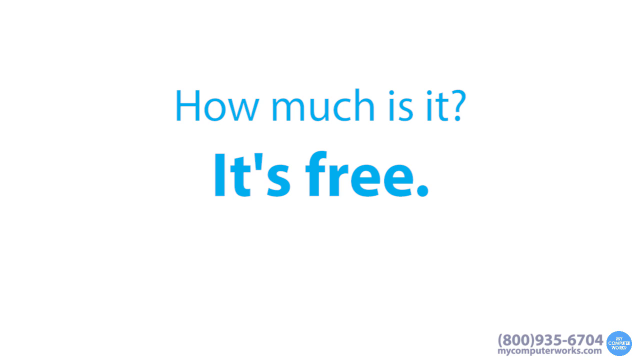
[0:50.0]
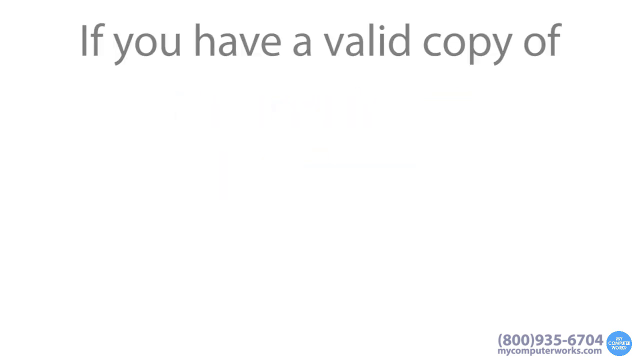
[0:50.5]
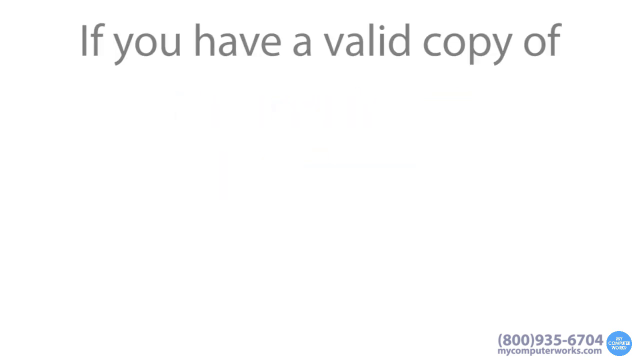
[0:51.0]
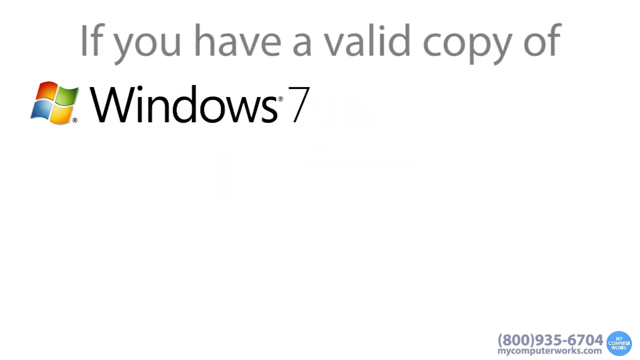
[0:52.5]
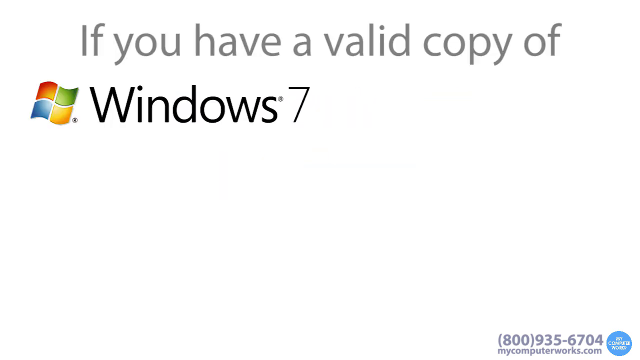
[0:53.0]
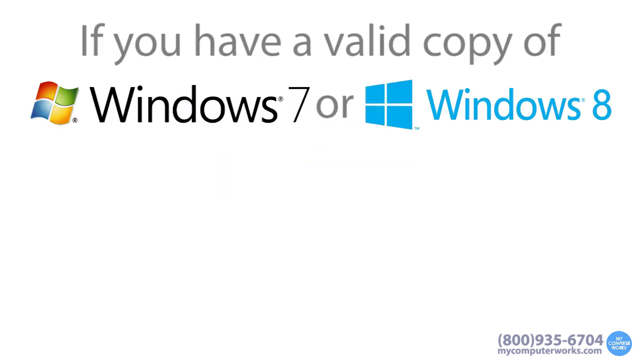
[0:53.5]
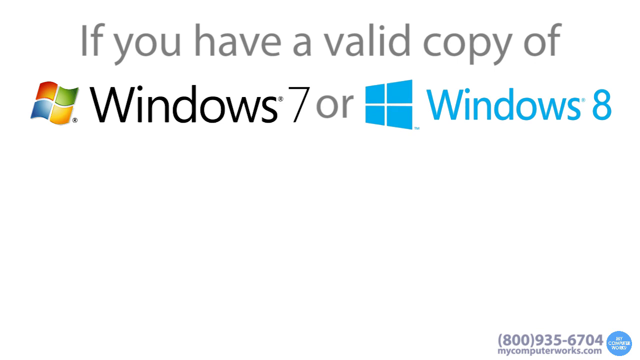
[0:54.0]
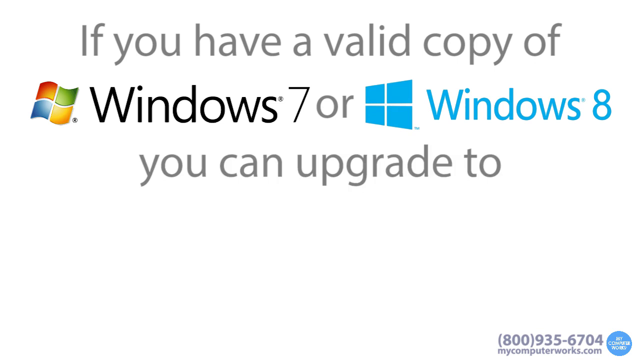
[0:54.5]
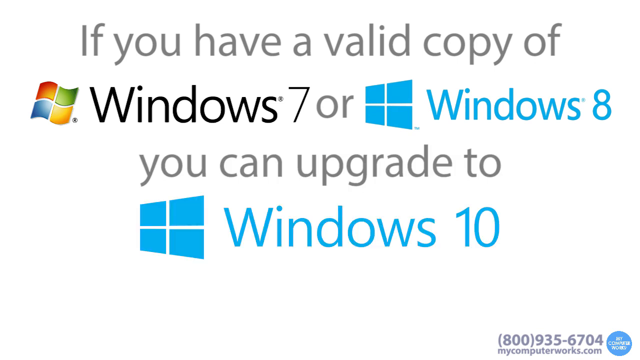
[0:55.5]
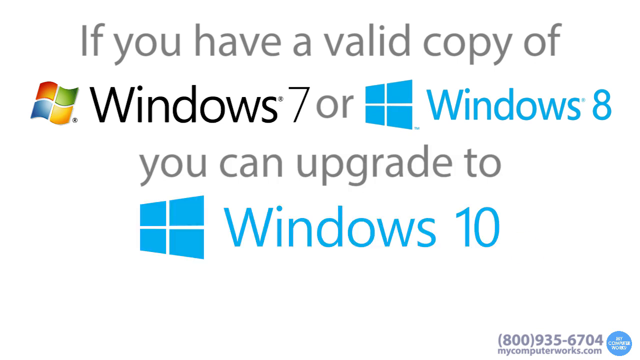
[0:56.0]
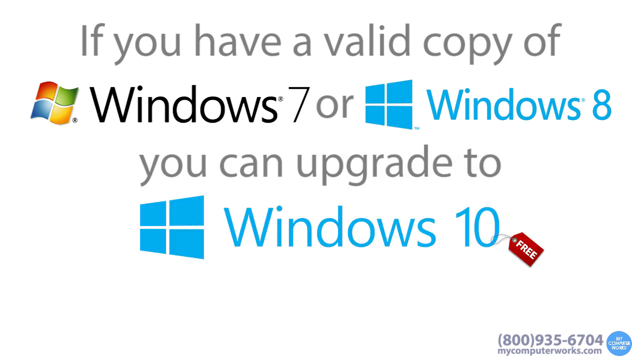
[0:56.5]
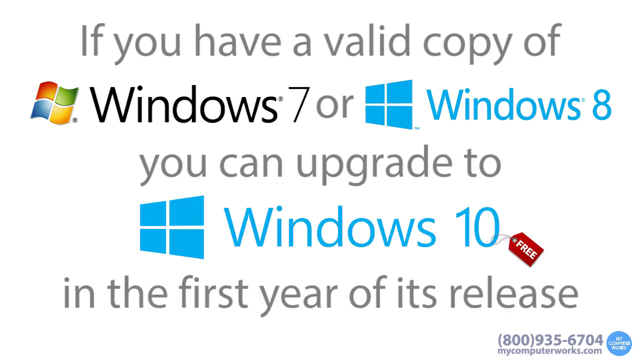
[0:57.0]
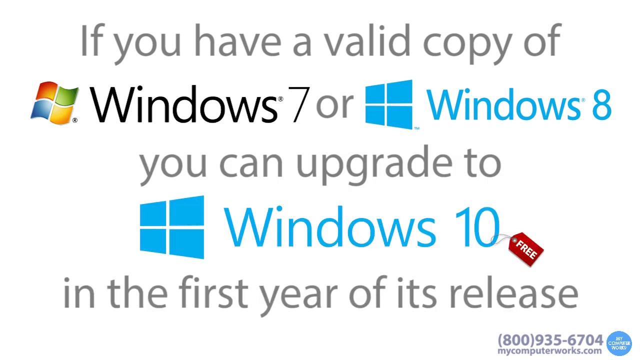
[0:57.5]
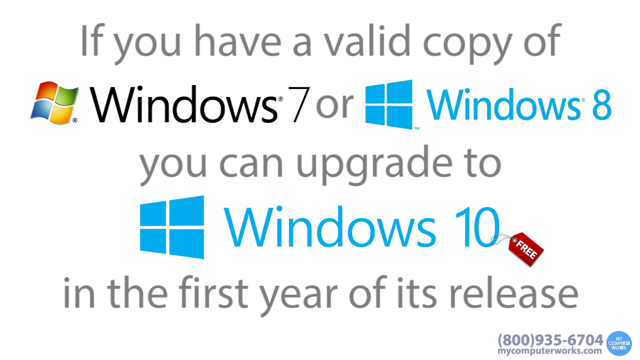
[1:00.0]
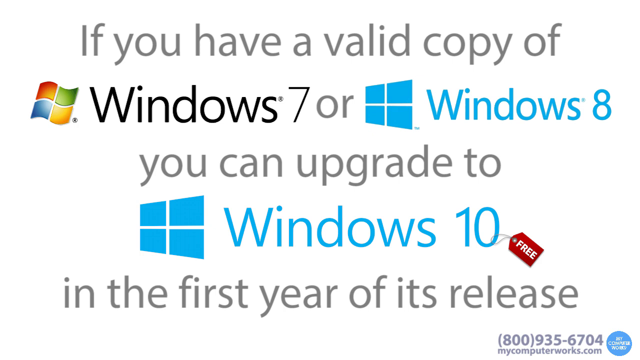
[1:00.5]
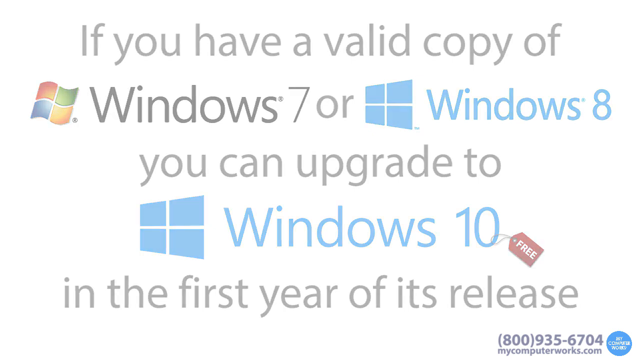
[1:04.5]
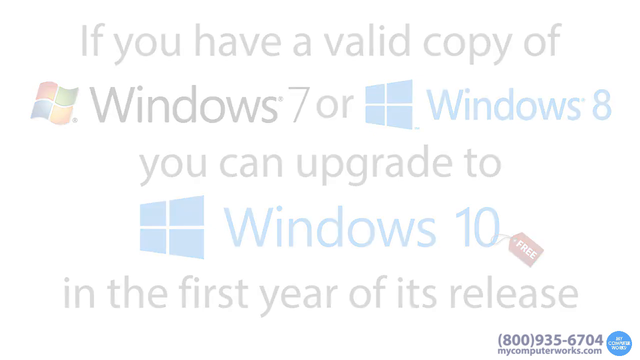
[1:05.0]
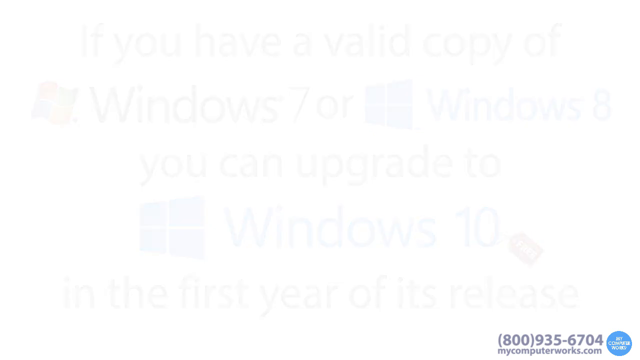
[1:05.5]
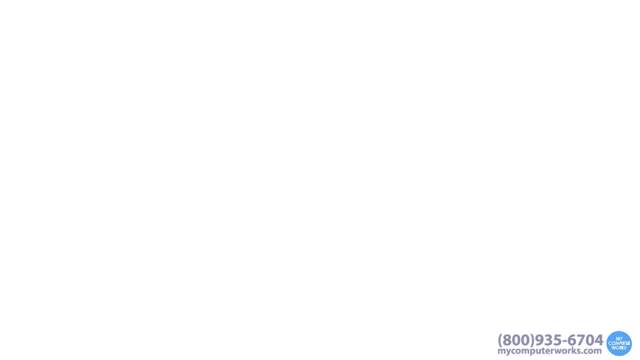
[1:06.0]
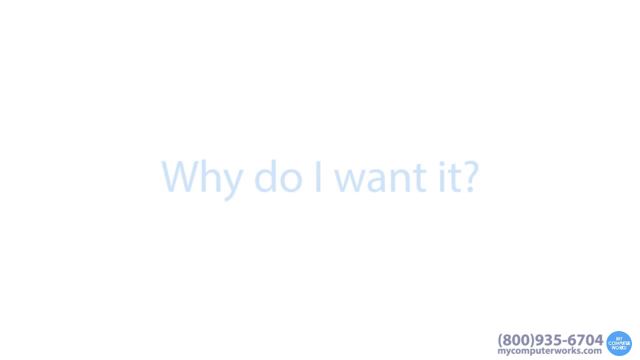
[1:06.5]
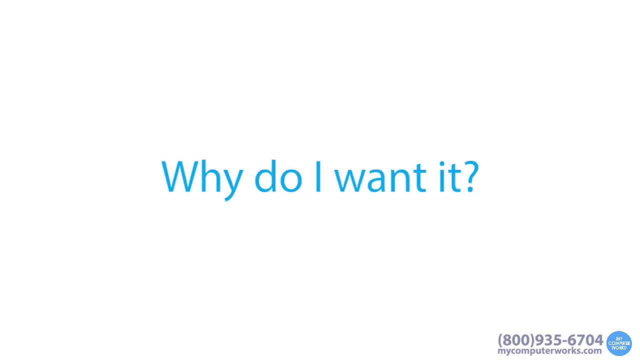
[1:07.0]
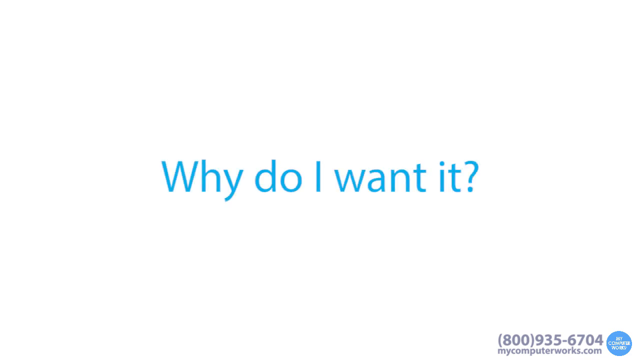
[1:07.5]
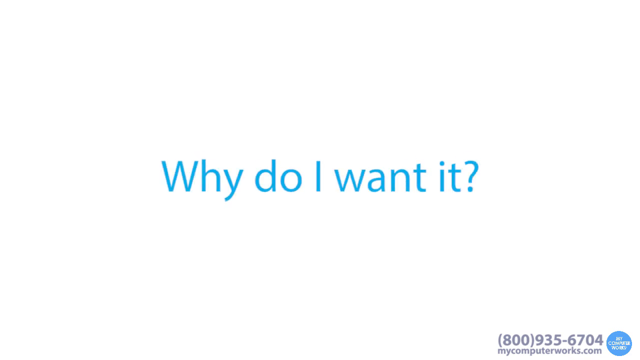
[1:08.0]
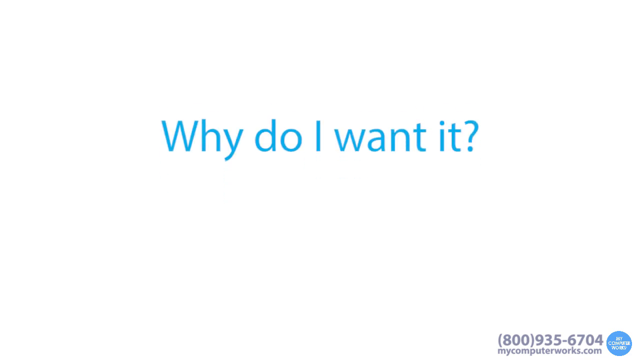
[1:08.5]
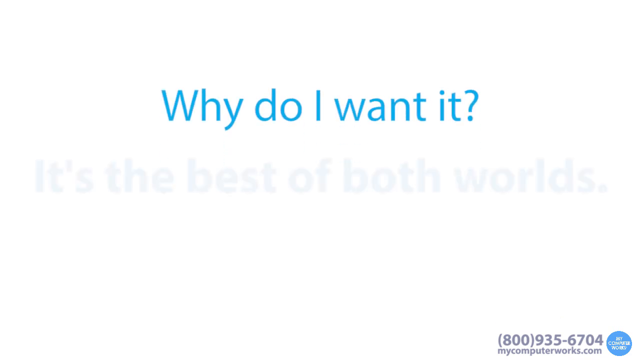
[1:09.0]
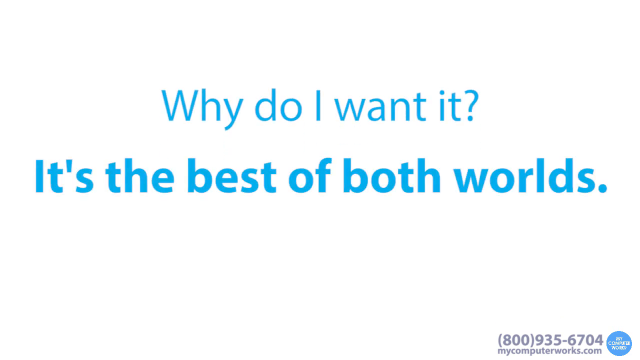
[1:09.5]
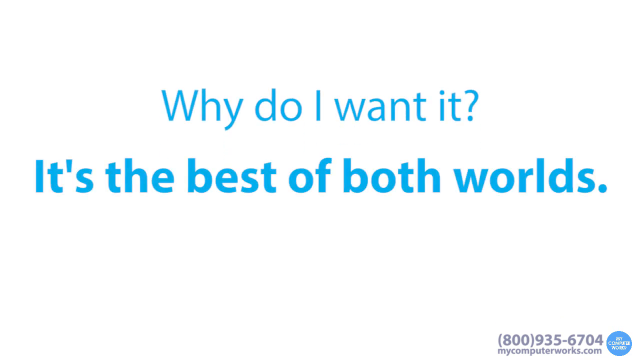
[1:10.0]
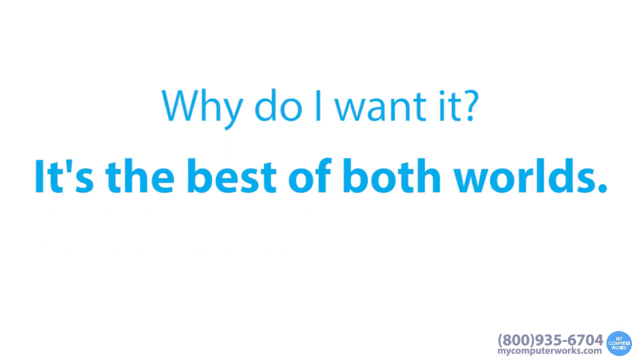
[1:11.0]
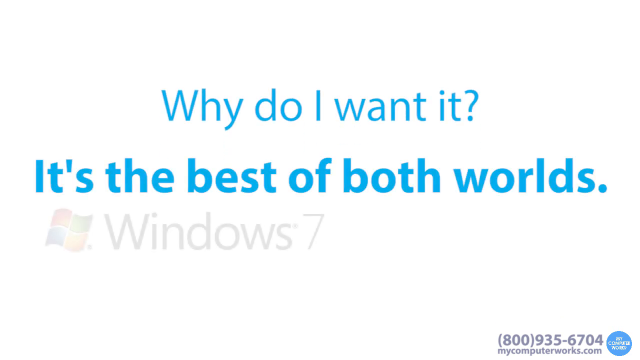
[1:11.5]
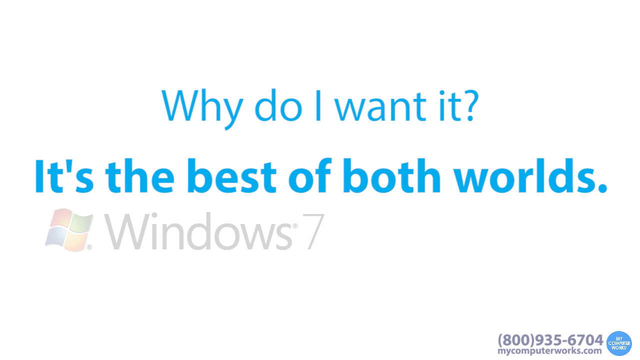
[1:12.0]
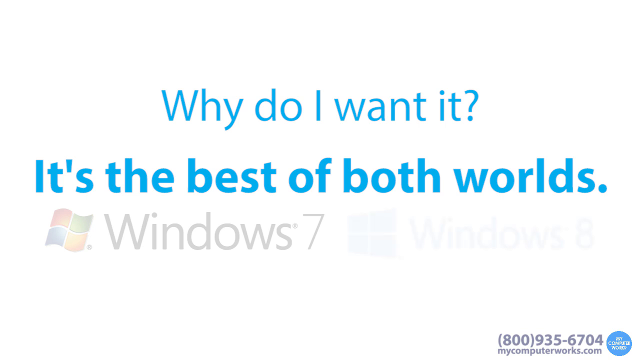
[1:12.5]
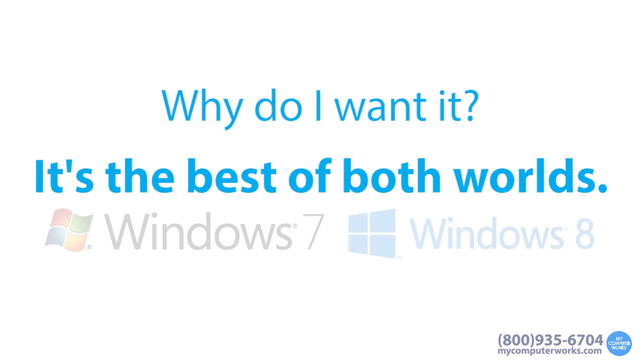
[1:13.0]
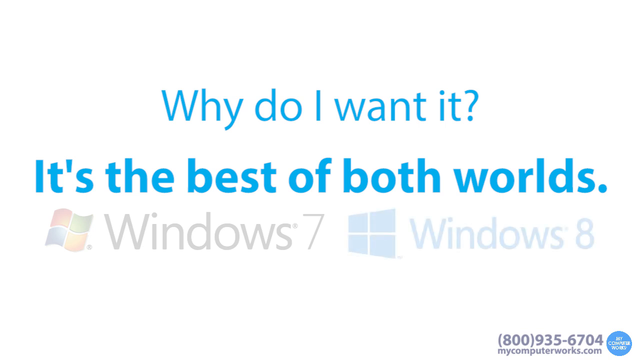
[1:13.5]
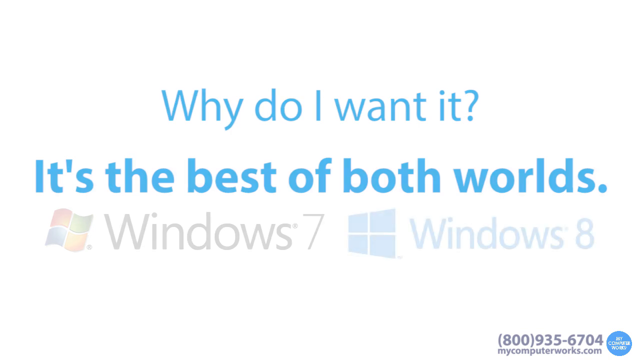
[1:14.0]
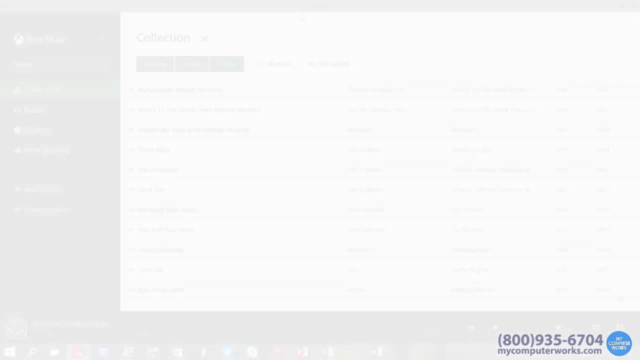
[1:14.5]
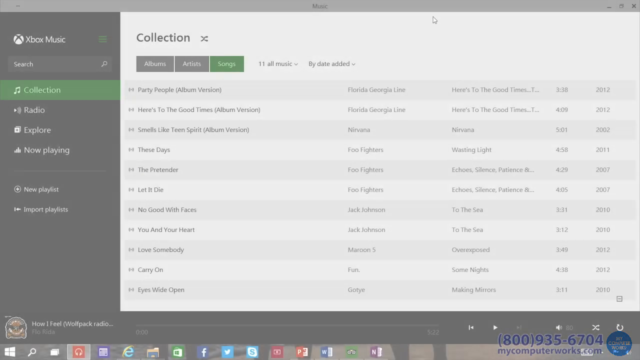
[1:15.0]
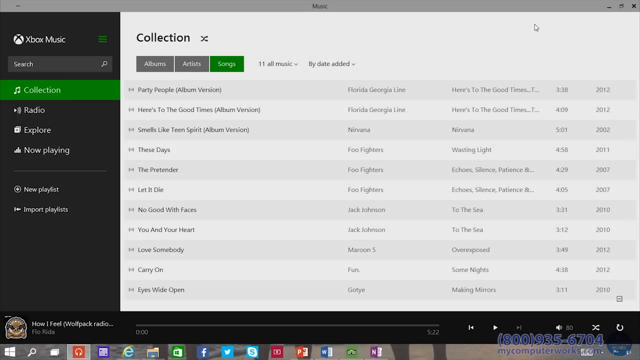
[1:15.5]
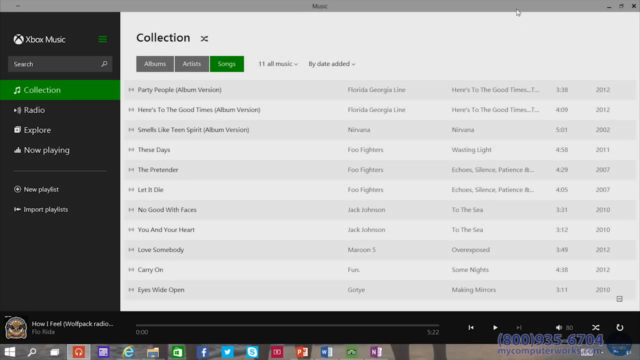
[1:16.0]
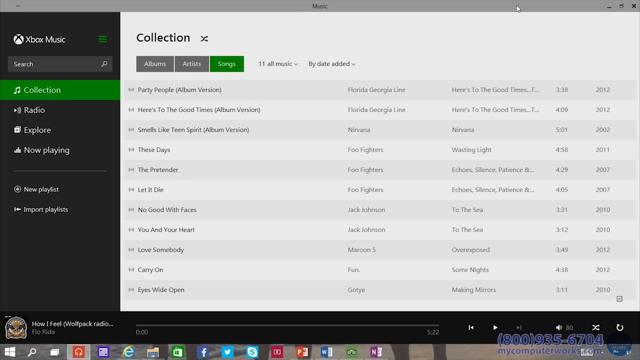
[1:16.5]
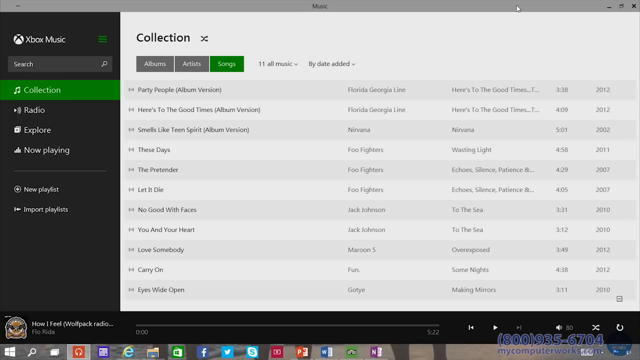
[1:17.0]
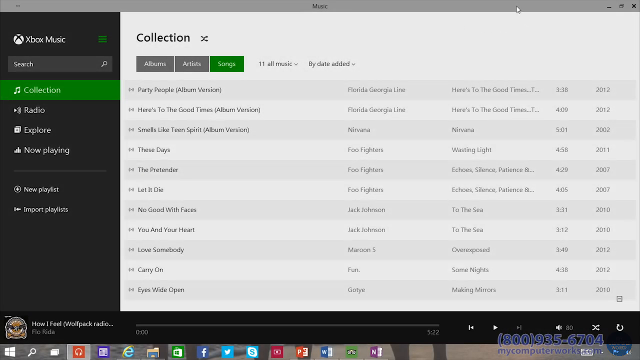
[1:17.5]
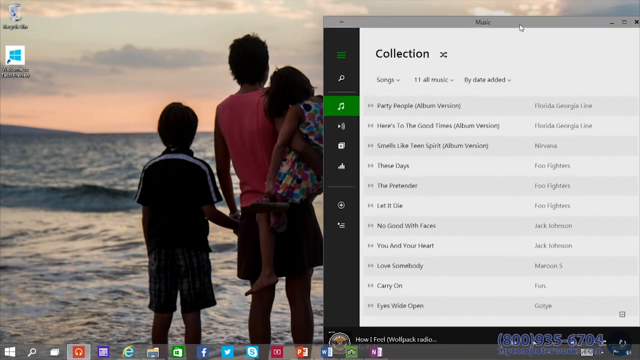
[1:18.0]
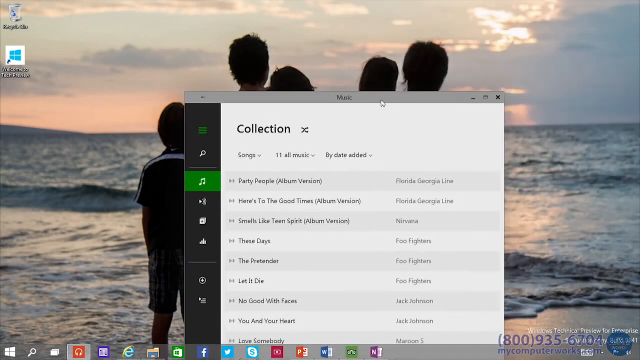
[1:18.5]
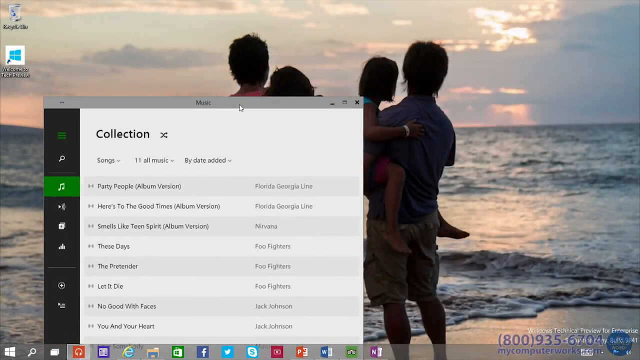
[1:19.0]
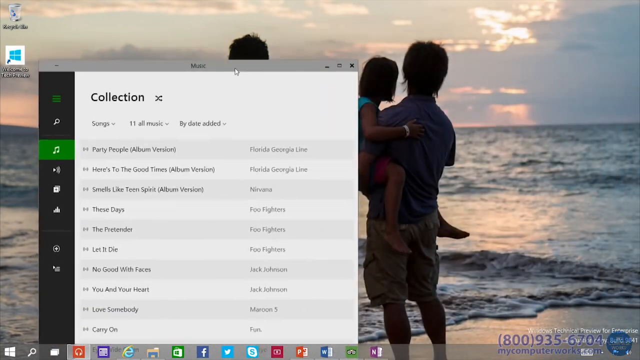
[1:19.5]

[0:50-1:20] Blue text sits in the centre of a white screen that shades through a gradient to black at the very bottom. The blue writing fades out, leaving the large white area. A row of grey text pops up at the top of the screen: "If you have a valid copy of", and beneath it to the left the Windows 7 logo pops in. A grey word, "or", appears next to it, and then the blue Windows 8 logo pops up right next to that. The grey text continues, "You can upgrade to", and below this the blue Windows 10 logo pops up. A second later a red price tag graphic with the word "Free" in white appears attached to the zero of Windows 10, and underneath grey text appears: "in the first year of its release". The text and imagery fade to white. A new line of text fades in in the middle of the screen: "Why do I want it?" It moves up, and in the space it vacates more blue text appears: "It's the best of both worlds". Underneath, the Windows 7 logo fades in to an extent, with the Windows 8 logo fading in to an extent next to it; both logos are semi-transparent. The screen fades to white and then into a software control panel on a computer desktop with "Xbox Music" written in the top left. The panel has a white box on the right and a black column on the left with a list of options including Collection, Radio, Explore and Now Playing, and below these New Playlist and Import Playlist. The box on the right holds a collection of music arranged in horizontal rows showing the title and the artist. The shot cuts to the music panel dragged to the right-hand side of the desktop, leaving the left side empty. The desktop background shows a family standing looking out at the sea, seen from behind and silhouetted against the sky. An adult of indeterminate sex in the middle holds a young girl with their right arm; the girl has her legs wrapped around the adult's waist, facing them side on. To the adult's left is a young boy whose right hand they hold with their left hand. In the top left corner of the screen are two icons: at the top, Recycle Me with a picture of the bin, and underneath, a blue Windows logo with unclear writing beneath it. The panel is then moved to the left, revealing the right-hand side of the desktop, where another adult of indeterminate sex on the right holds a child in their left arm with the child's legs on either side of his body, the child facing right towards the adult, both looking out to sea.